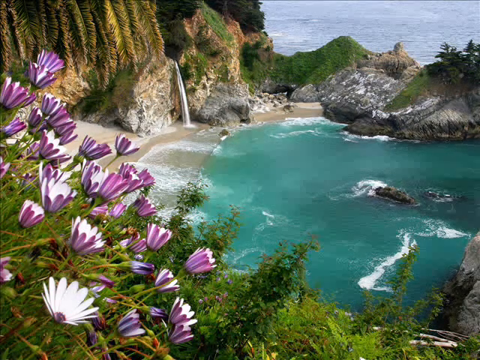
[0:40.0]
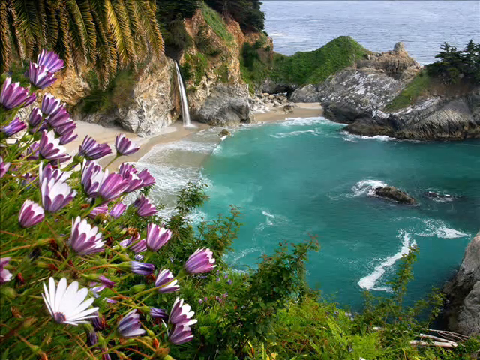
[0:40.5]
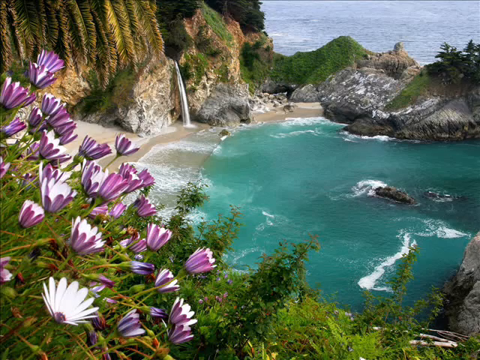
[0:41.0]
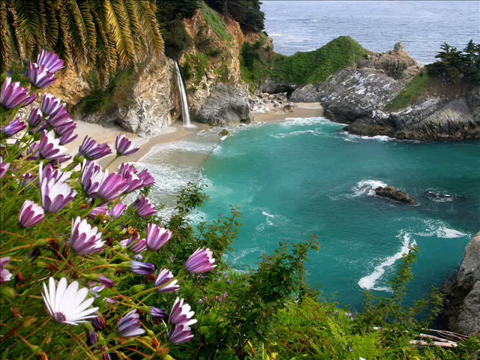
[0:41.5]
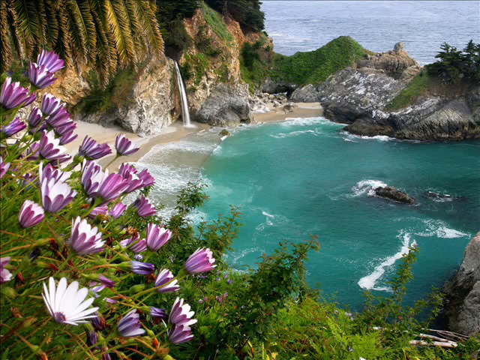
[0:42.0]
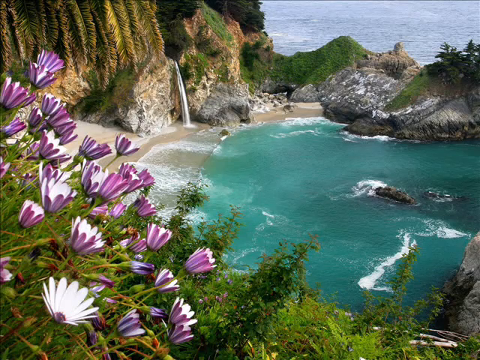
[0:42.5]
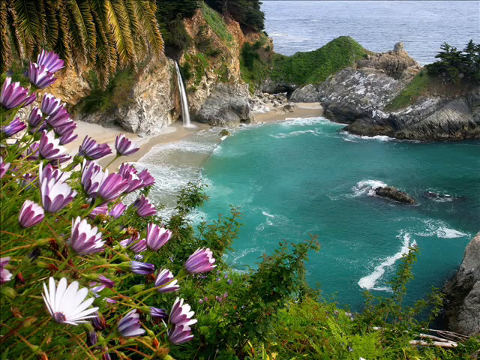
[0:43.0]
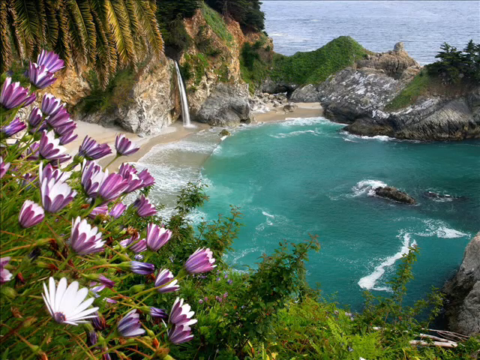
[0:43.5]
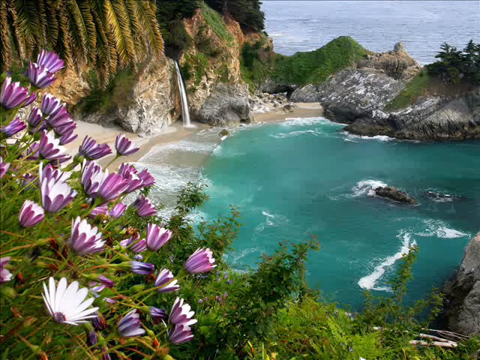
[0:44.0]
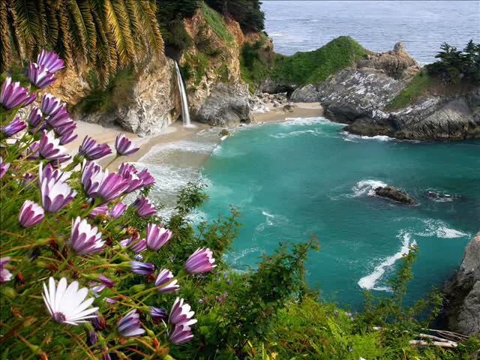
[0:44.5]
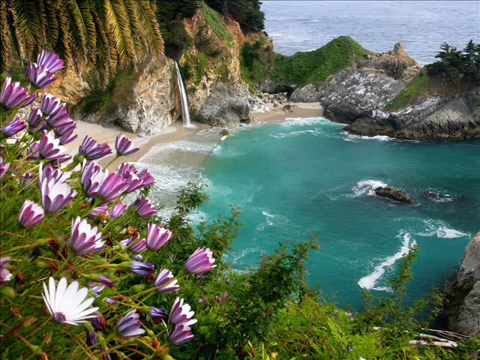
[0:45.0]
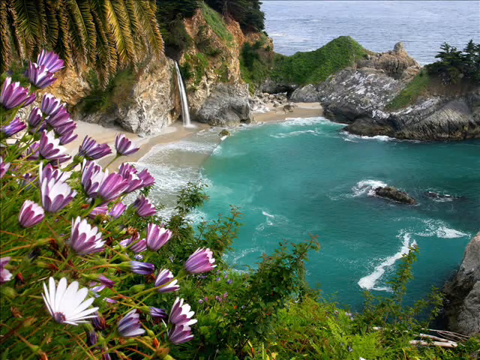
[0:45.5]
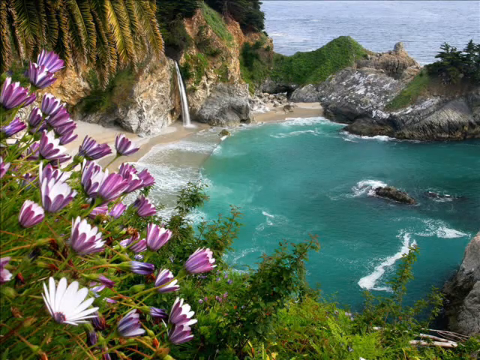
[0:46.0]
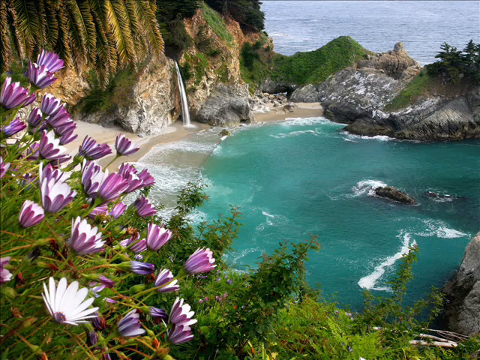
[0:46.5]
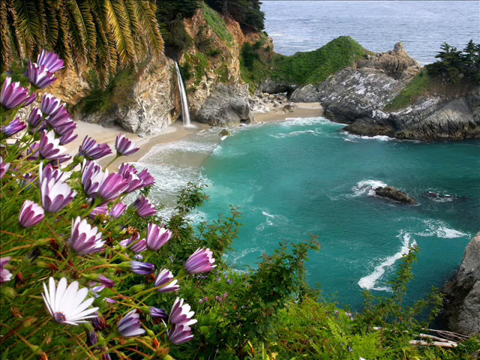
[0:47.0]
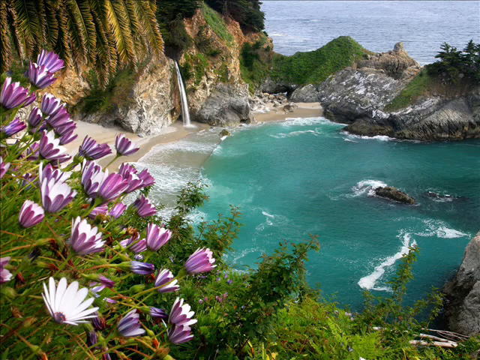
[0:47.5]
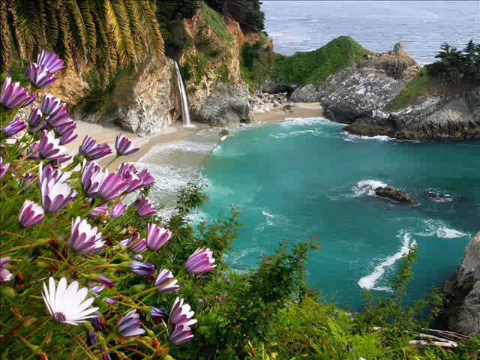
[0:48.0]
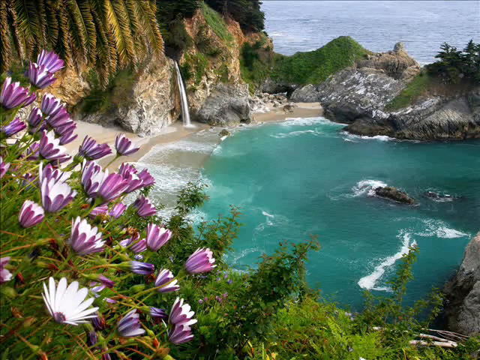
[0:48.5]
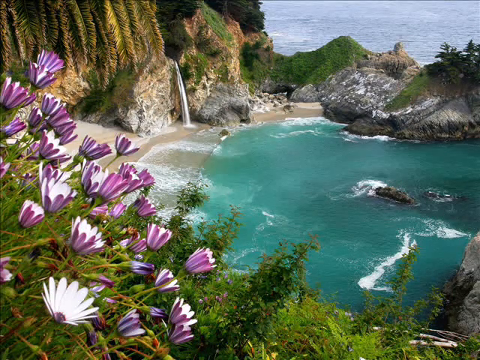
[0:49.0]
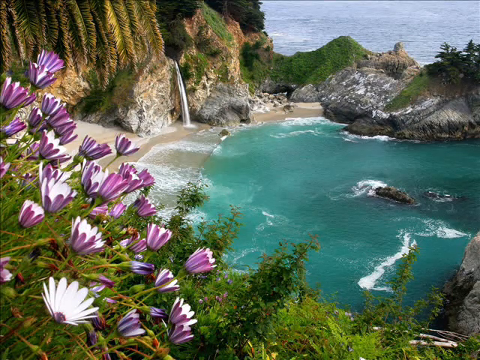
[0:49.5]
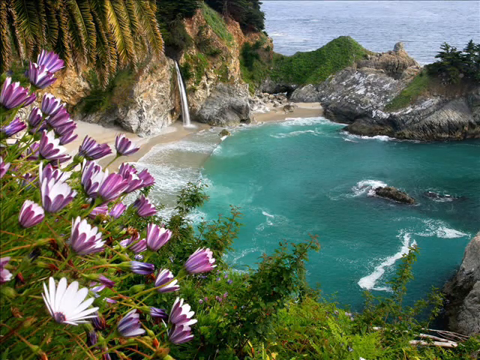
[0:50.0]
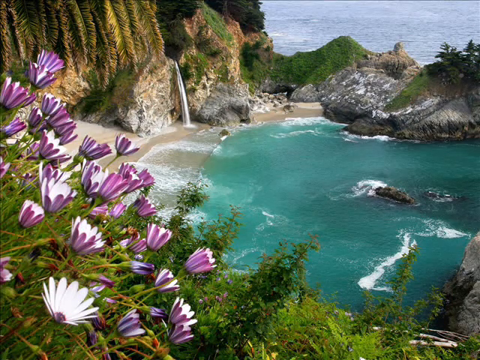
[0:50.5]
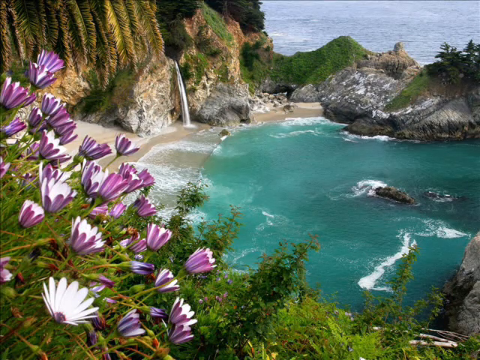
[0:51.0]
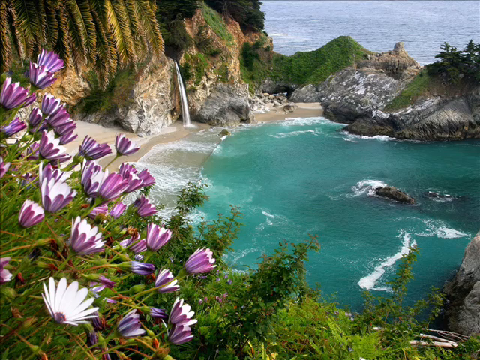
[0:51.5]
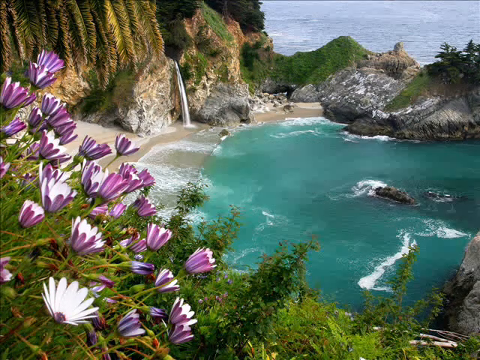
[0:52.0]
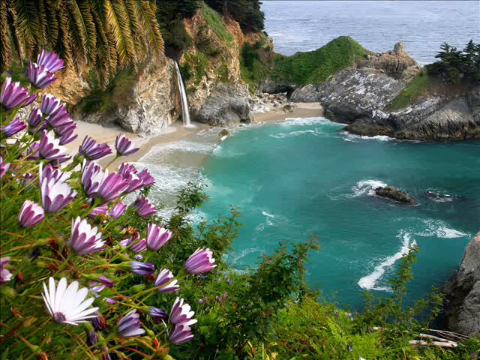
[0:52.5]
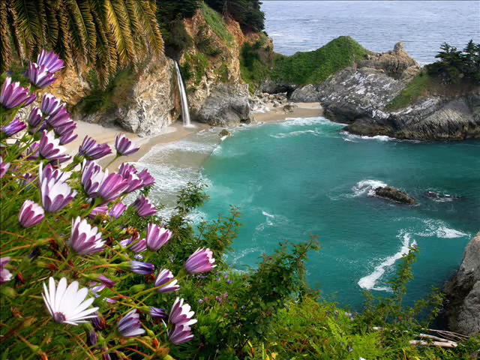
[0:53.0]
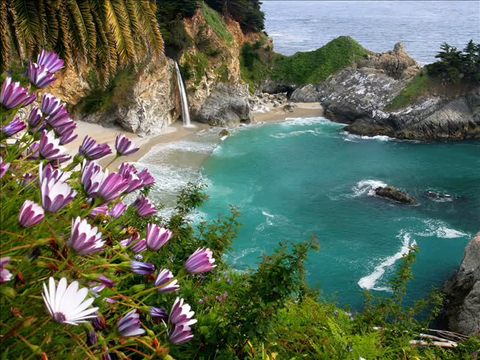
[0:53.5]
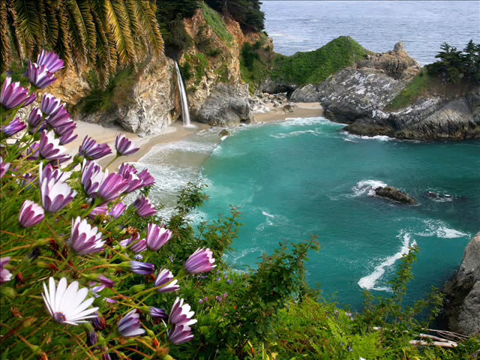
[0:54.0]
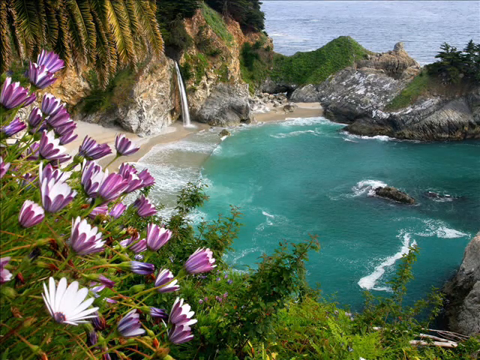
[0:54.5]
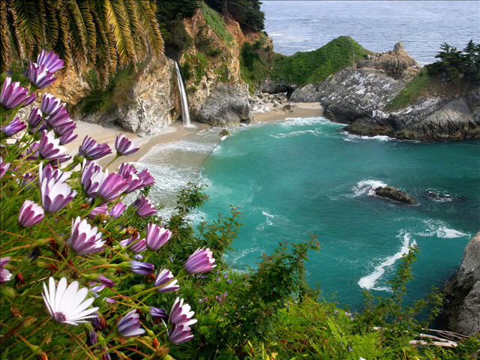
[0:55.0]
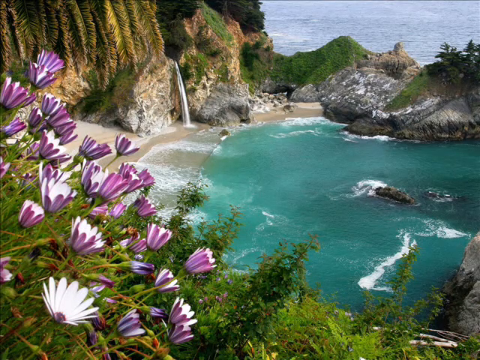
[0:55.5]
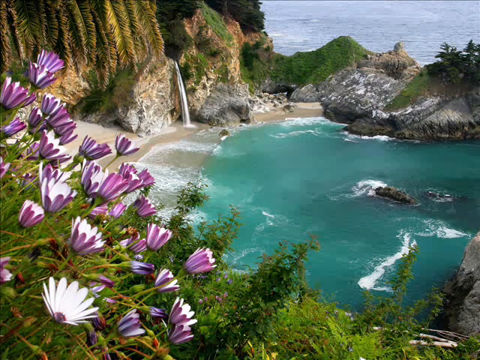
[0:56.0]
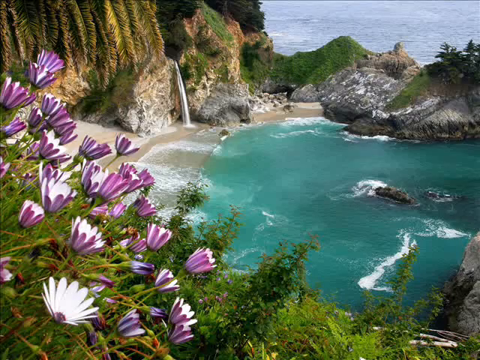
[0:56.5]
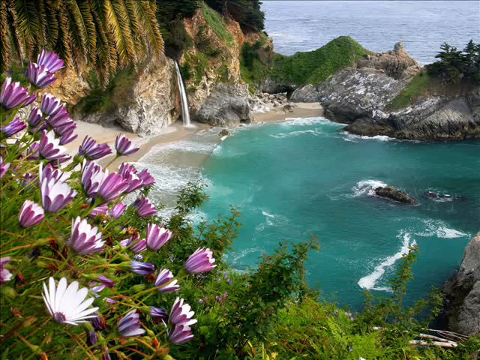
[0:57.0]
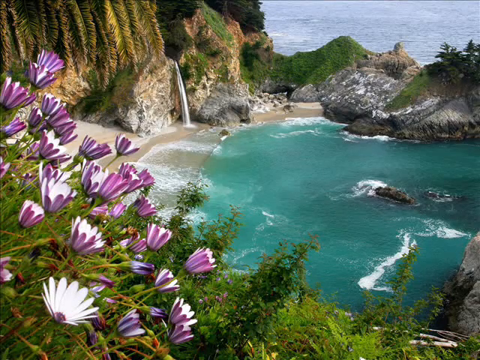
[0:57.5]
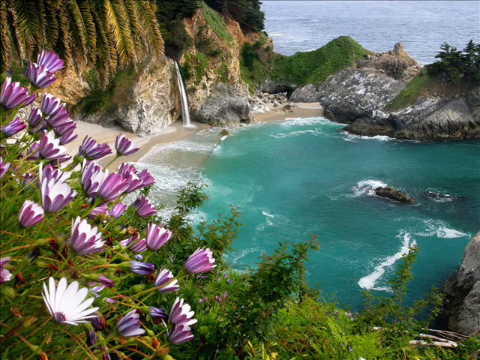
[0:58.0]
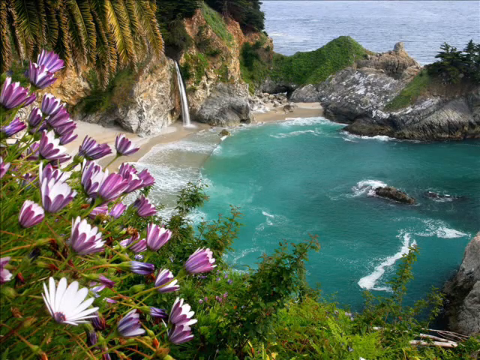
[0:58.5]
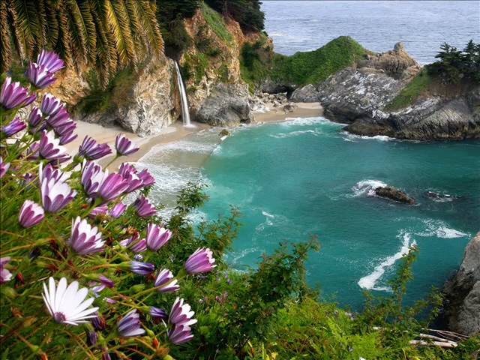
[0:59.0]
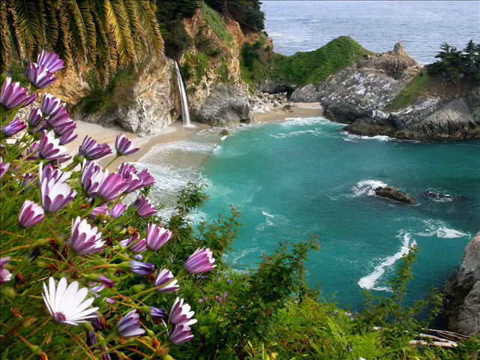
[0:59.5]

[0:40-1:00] Nothing has changed, and it still seems to be a still image. Toward the center of the view, the flowers seem to continue blooming further down. Judging by the position of the waterfall and rocks across, the camera appears to be relatively high up, perhaps 20 to 30 feet above the water, and the purple and bright purple flowers further below appear much smaller. The rest of the vegetation is mostly green, generic-looking tropical plants, with no extra flowers or unique leaf structures, just small green leaves with tints of green and yellow. On the right are two sort of plain dark grayish rocks, probably part of the barrier around the oasis shore. Nothing else seems to be on these rocks on the near side of the view.